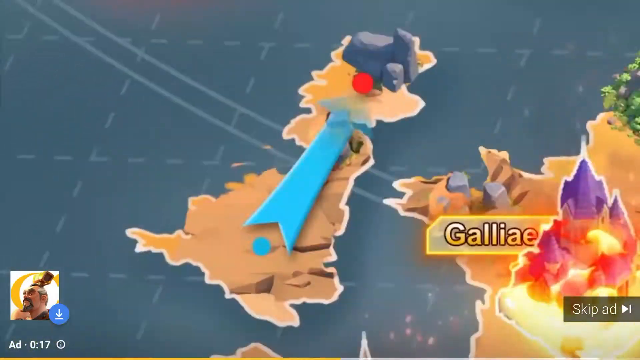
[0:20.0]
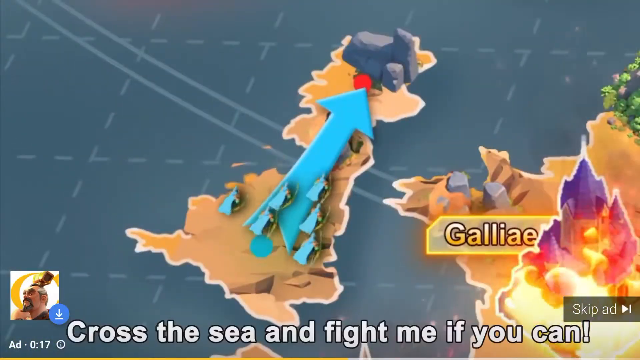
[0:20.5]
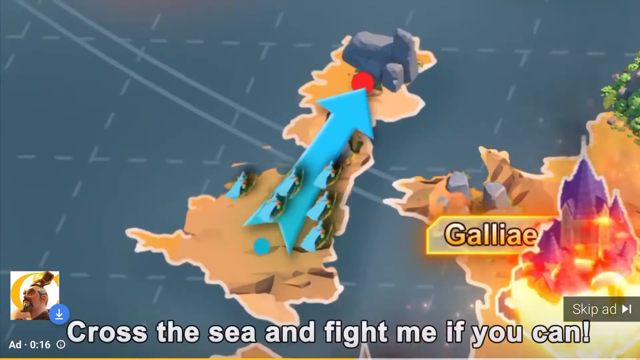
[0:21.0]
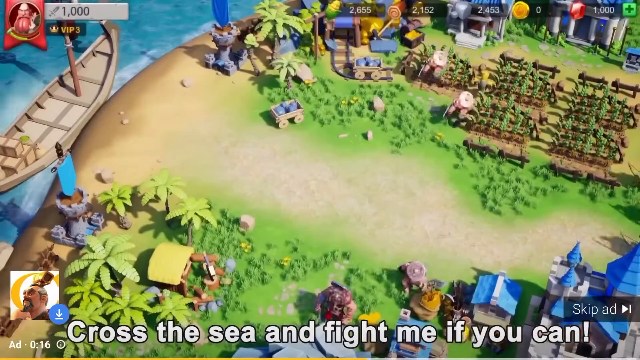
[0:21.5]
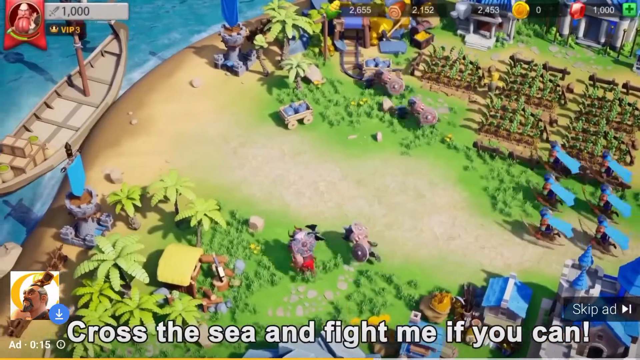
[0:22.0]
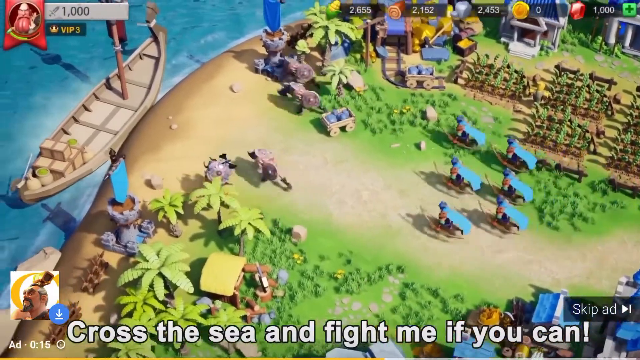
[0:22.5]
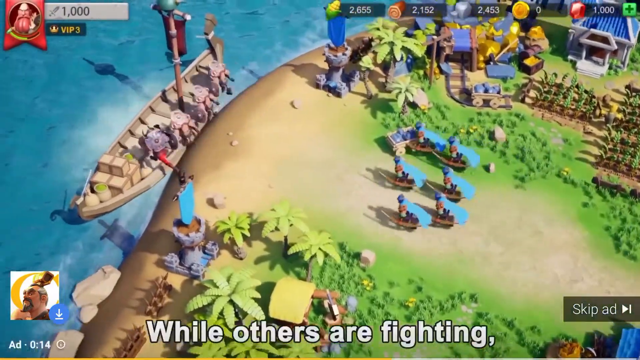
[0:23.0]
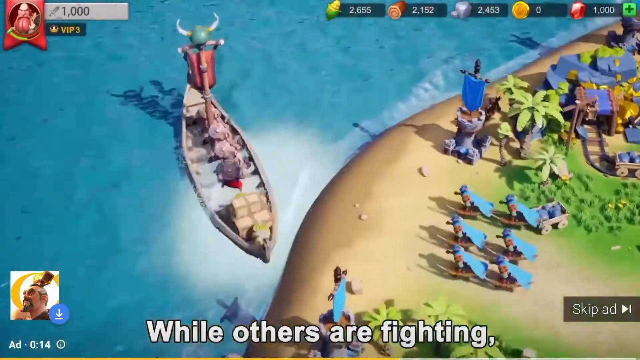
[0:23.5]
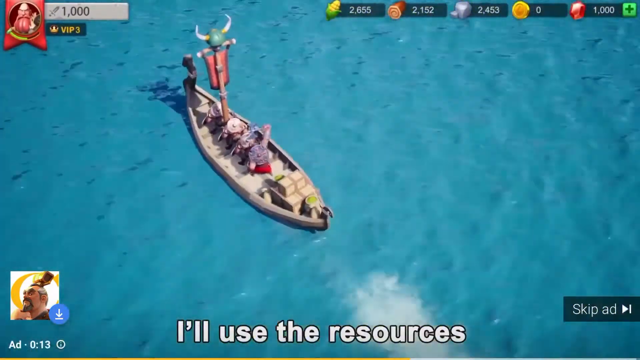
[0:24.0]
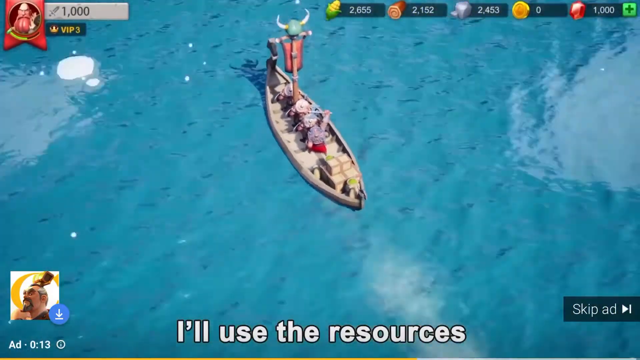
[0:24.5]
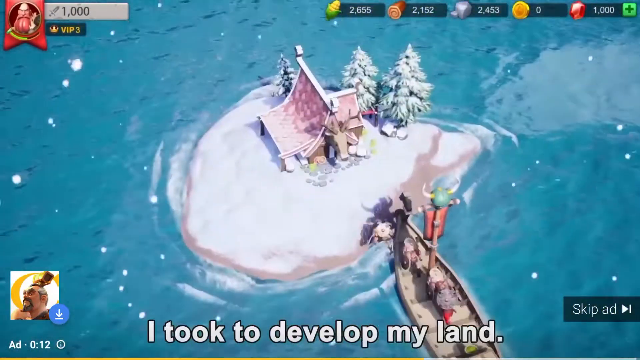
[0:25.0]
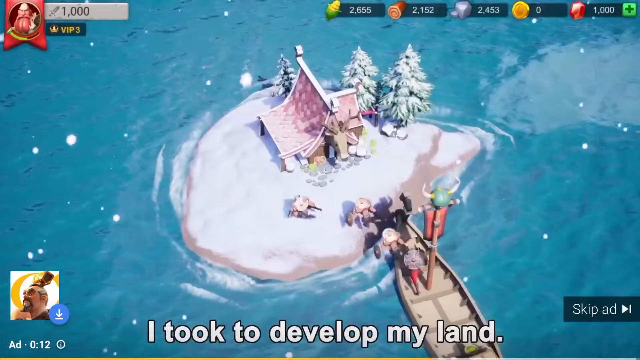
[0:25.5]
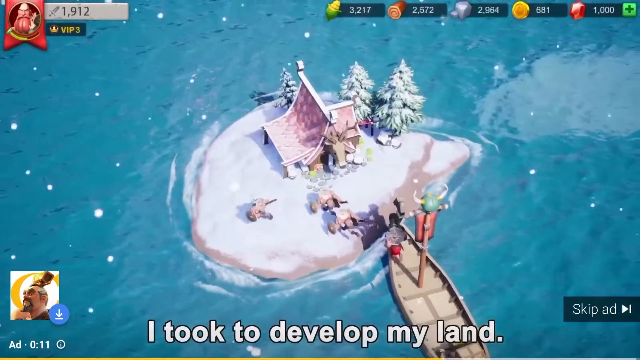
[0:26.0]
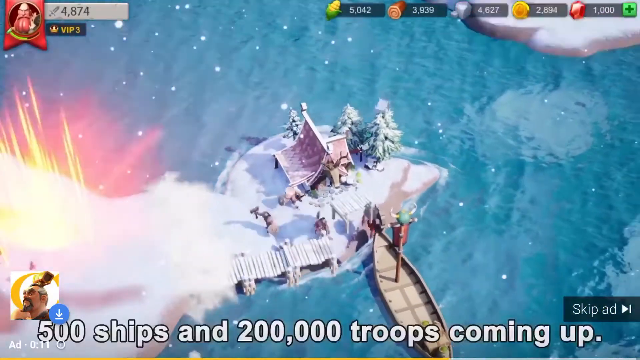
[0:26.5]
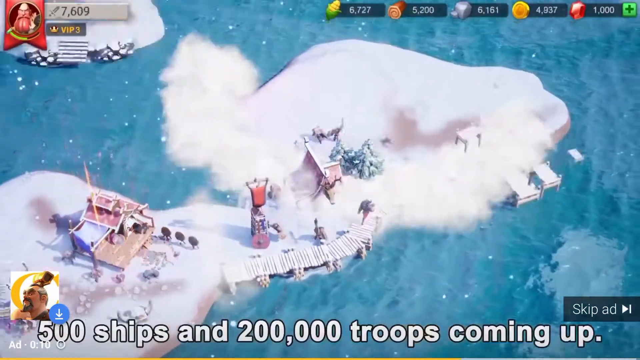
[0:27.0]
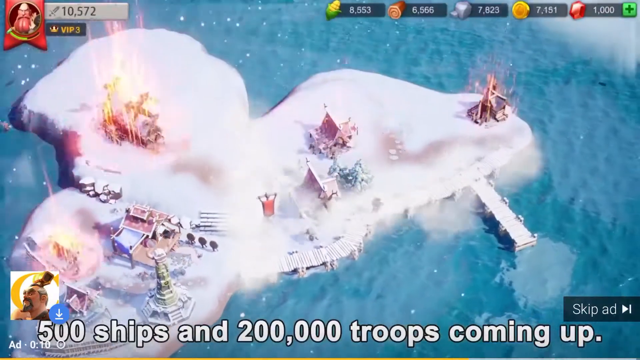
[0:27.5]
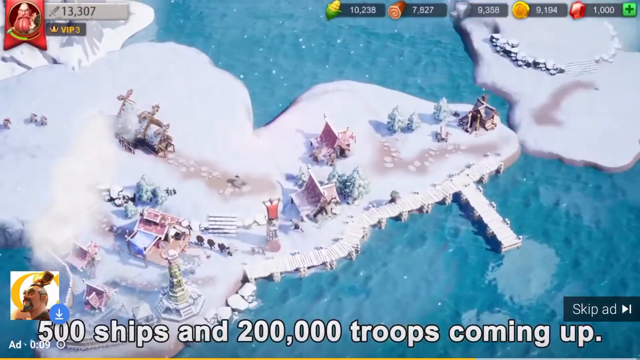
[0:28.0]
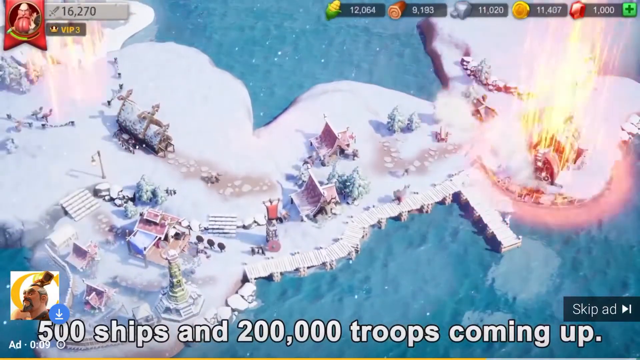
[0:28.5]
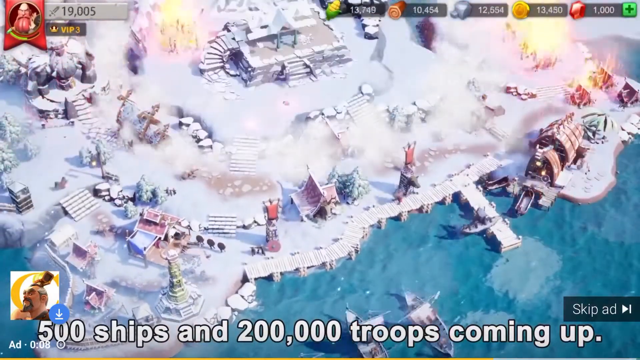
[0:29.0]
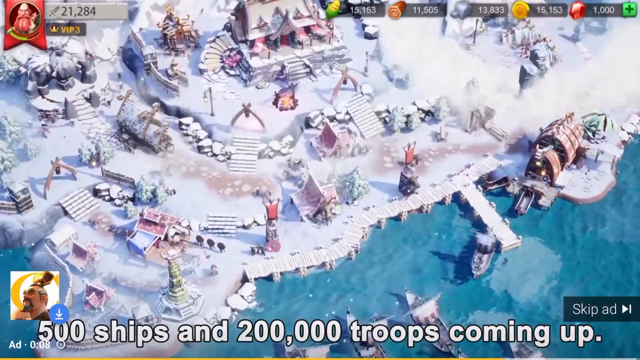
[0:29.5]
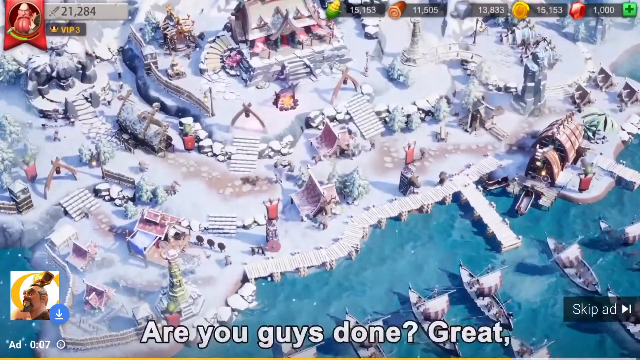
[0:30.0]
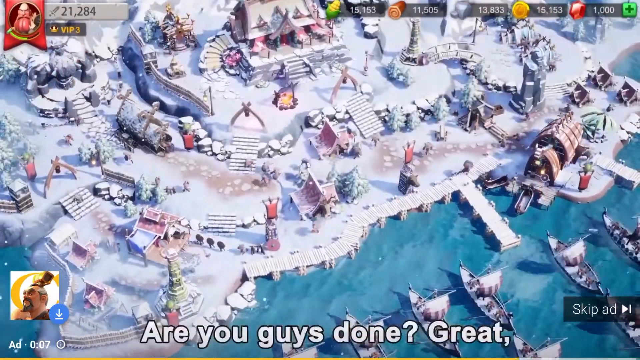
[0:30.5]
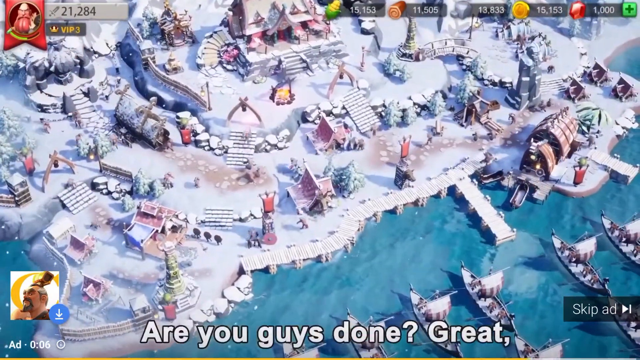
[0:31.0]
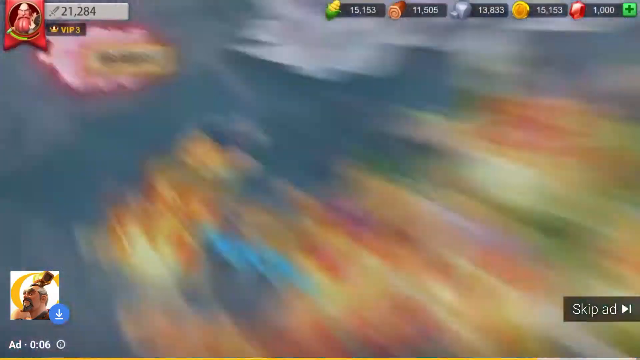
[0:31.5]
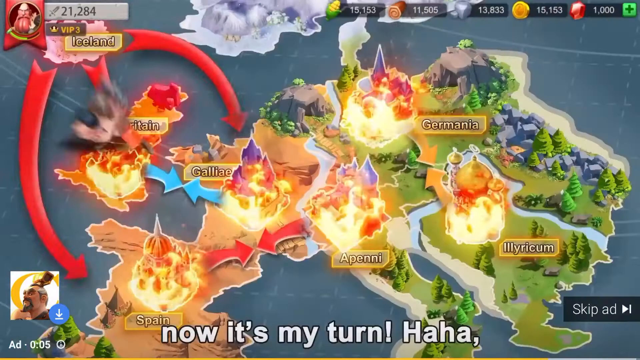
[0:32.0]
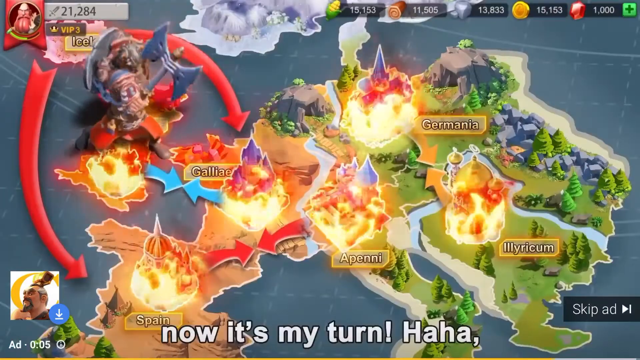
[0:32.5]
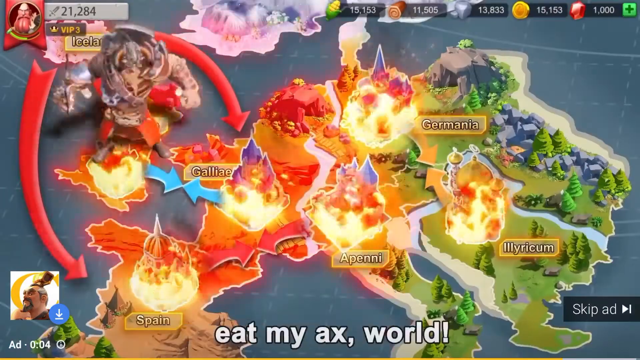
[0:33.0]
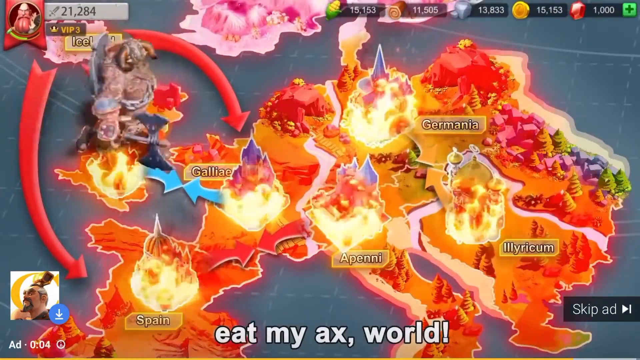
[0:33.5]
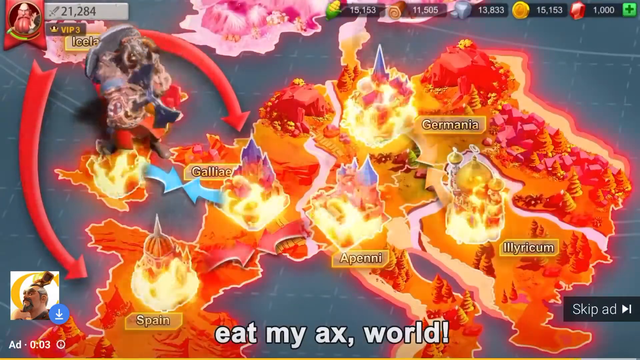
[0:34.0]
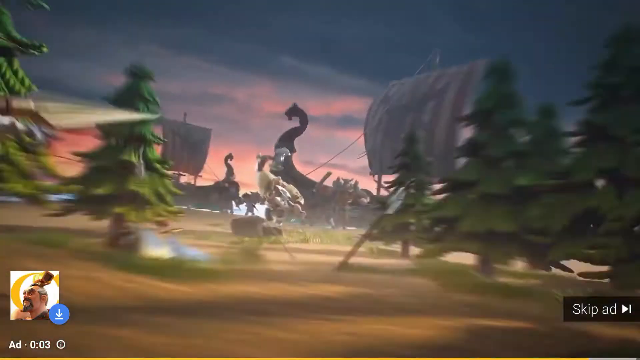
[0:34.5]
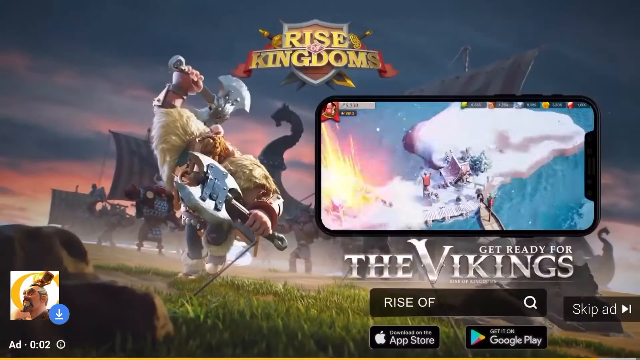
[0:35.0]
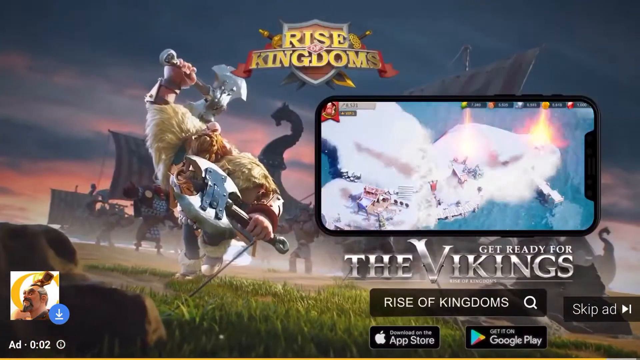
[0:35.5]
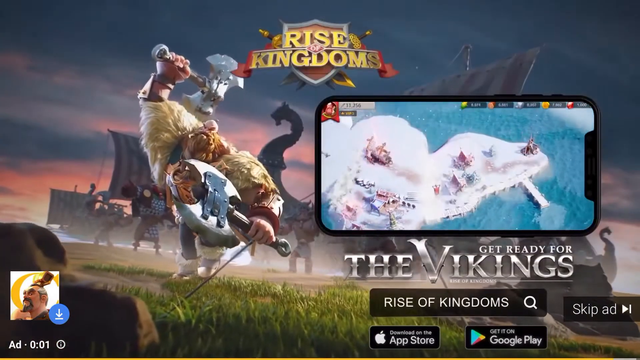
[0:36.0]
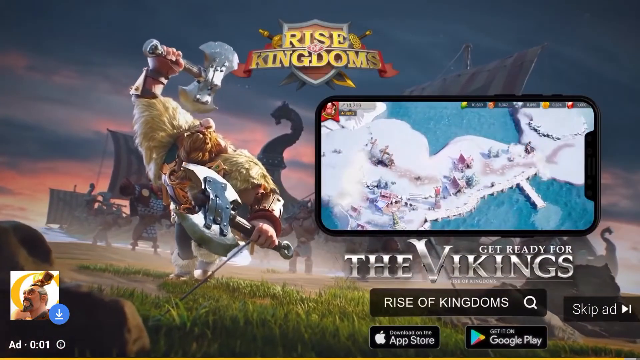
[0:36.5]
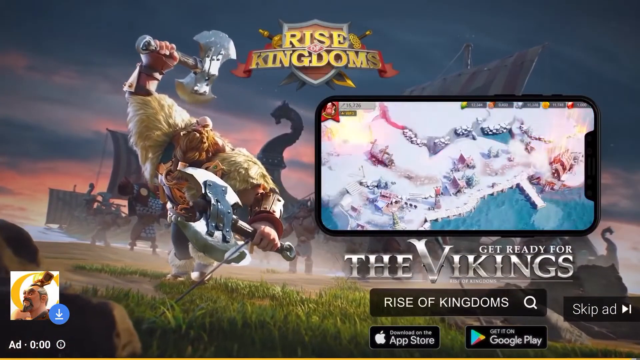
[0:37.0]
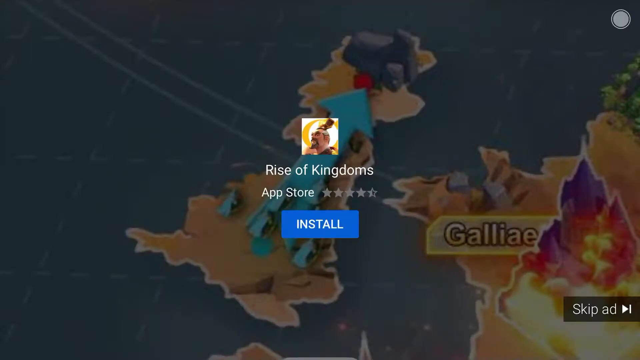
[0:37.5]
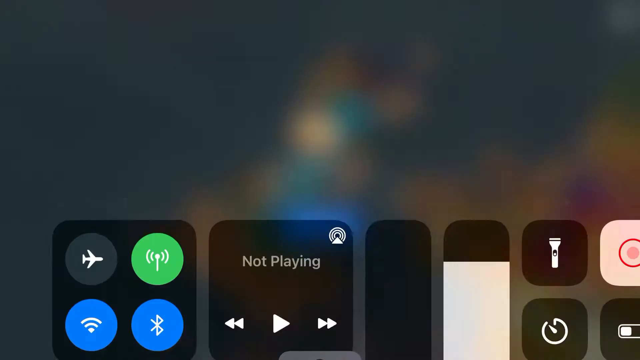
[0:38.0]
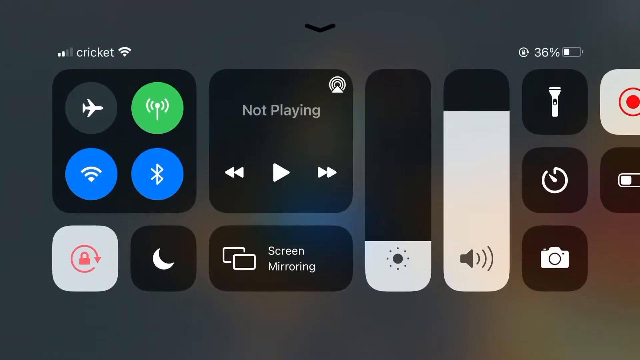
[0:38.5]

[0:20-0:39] A close-up shows what looks to be the island of Britain. A blue arrow runs diagonally from one end of the continent to the other, pointing from bottom to top, with a red square at its top point and a blue dot at its bottom point. Movement appears behind the arrows and from the left-hand side of the screen, with what looks like people trying to reach Britain. The scene appears to be a make-believe recreation of real countries involved in kingdom building. Invading forces jump into boats and move away from the mother continent, apparently heading over to Britain, but they divert and land at a particular point, and a continent builds immediately underneath their feet.